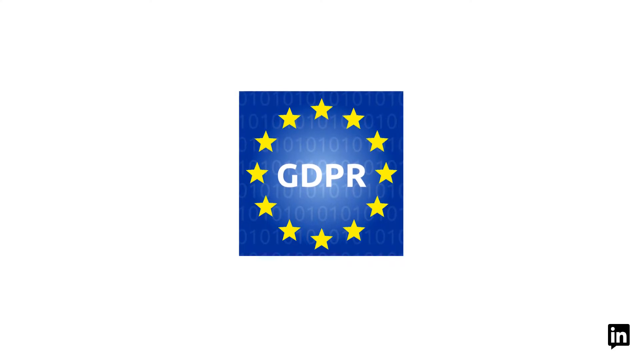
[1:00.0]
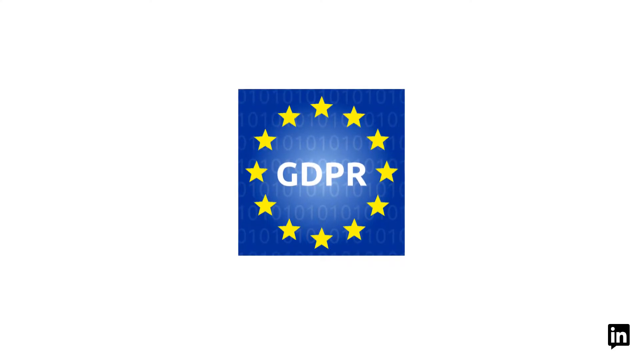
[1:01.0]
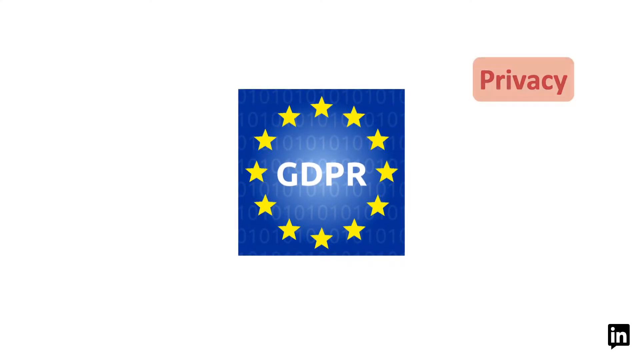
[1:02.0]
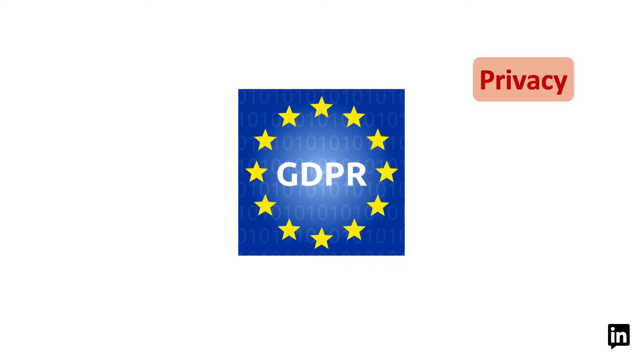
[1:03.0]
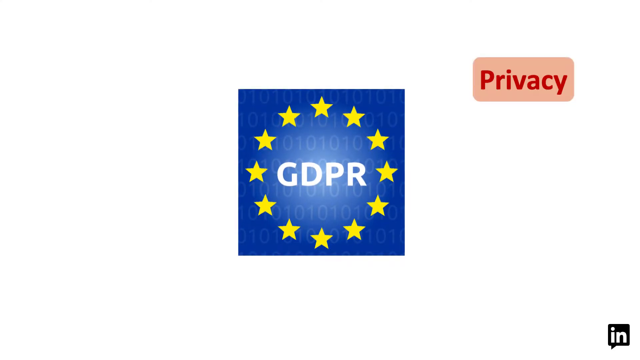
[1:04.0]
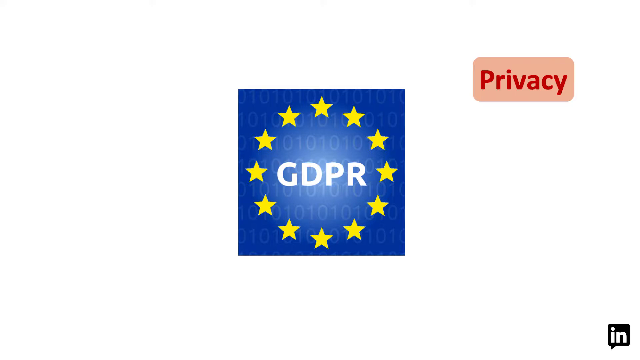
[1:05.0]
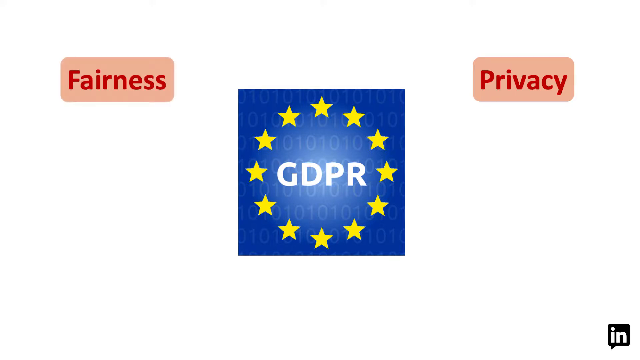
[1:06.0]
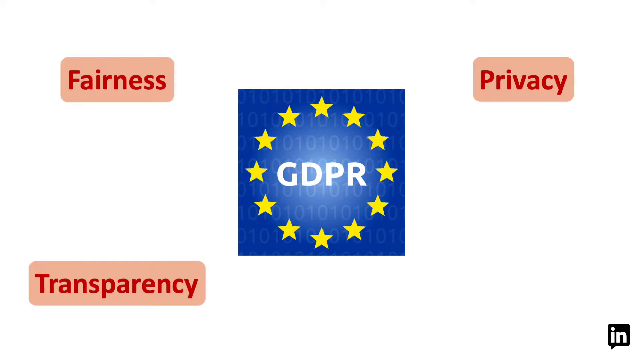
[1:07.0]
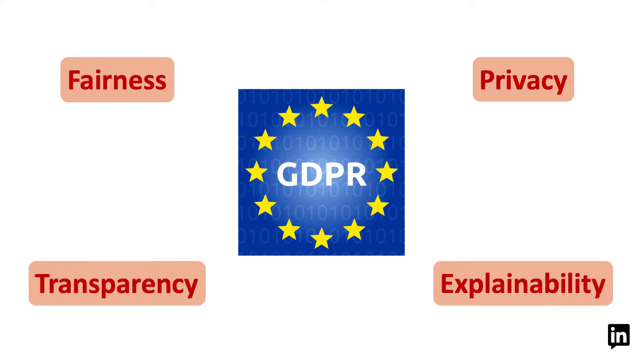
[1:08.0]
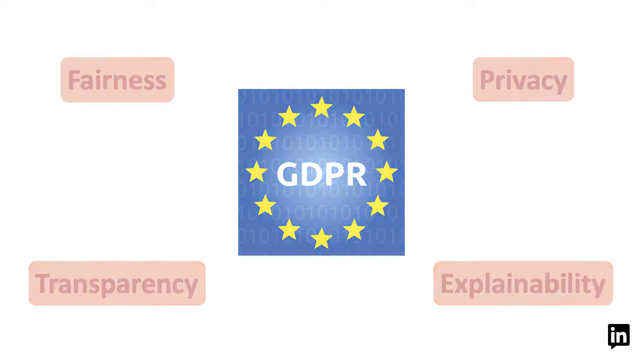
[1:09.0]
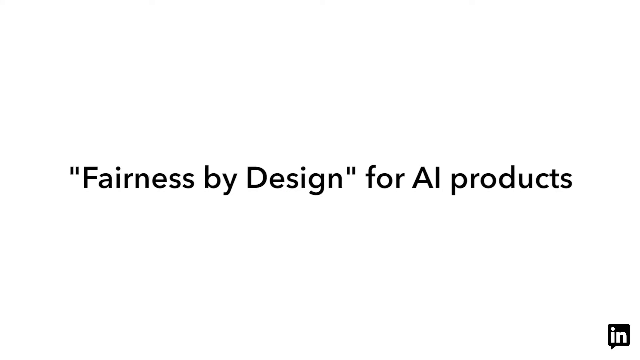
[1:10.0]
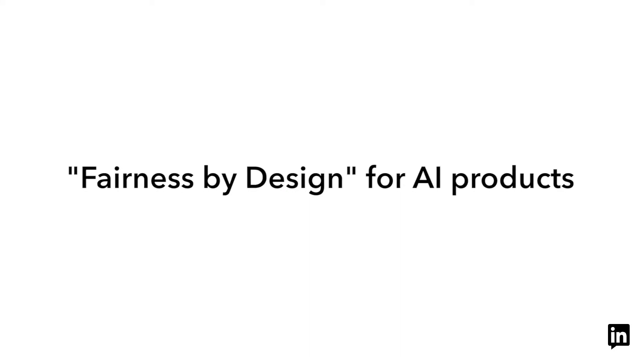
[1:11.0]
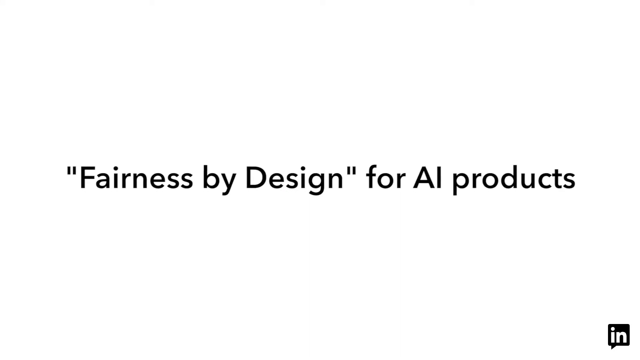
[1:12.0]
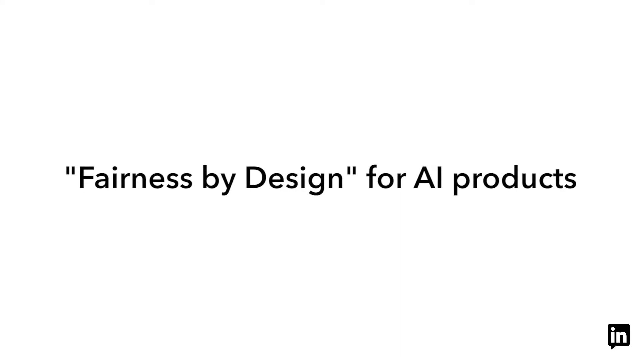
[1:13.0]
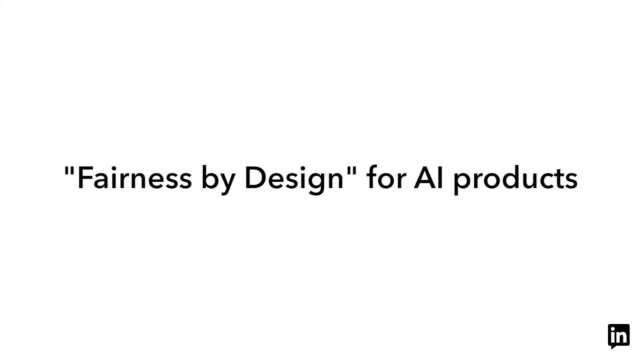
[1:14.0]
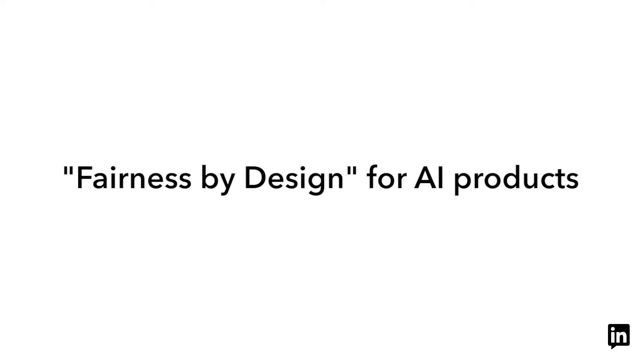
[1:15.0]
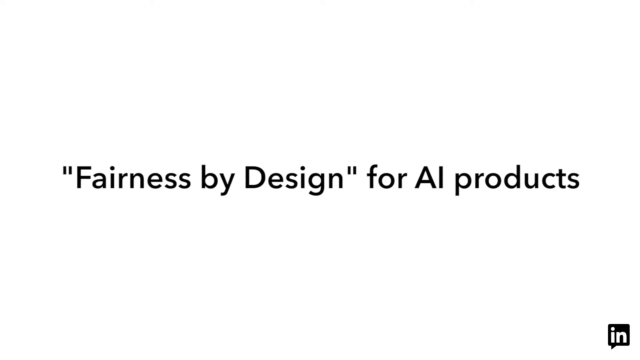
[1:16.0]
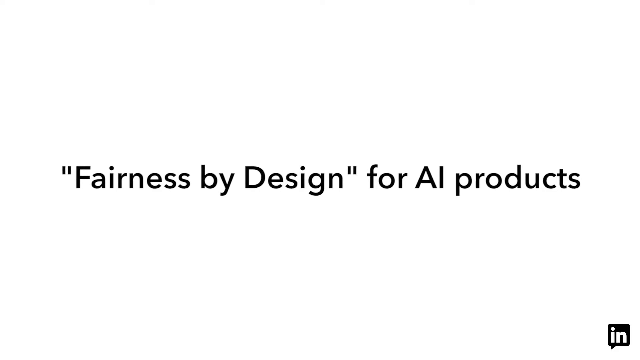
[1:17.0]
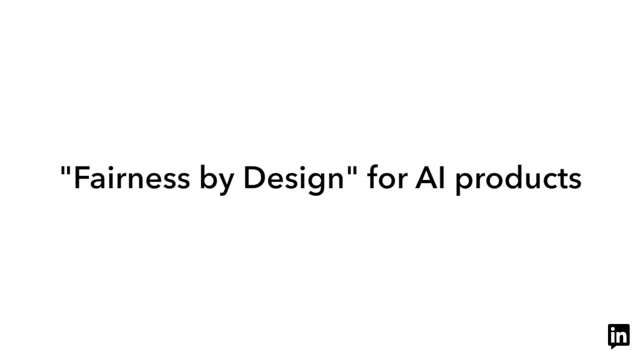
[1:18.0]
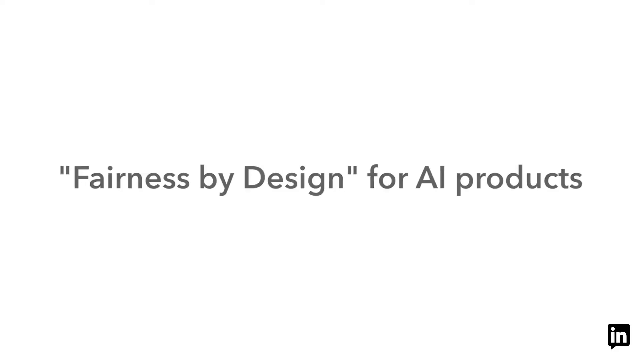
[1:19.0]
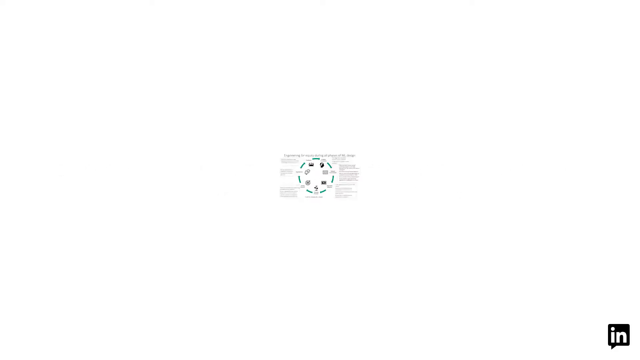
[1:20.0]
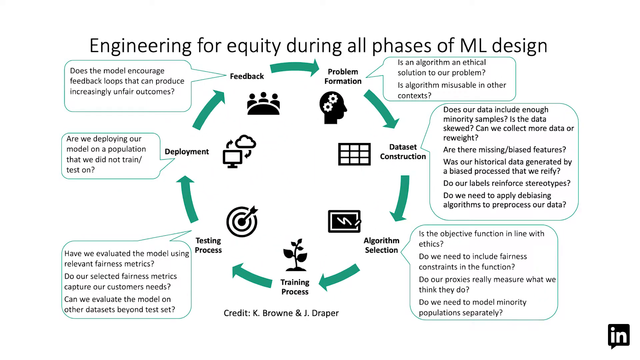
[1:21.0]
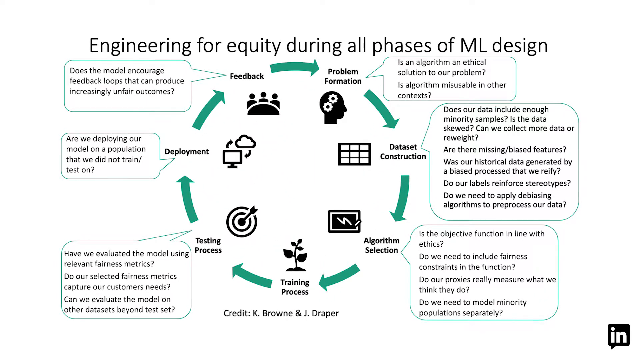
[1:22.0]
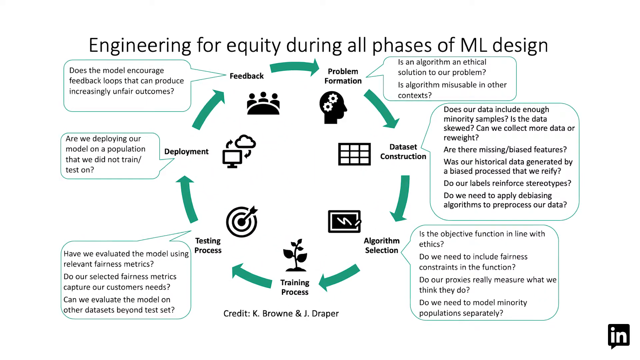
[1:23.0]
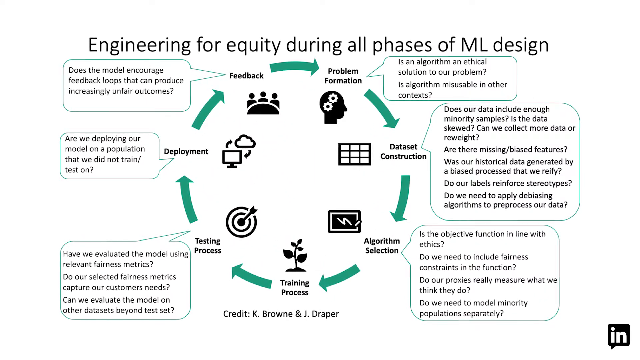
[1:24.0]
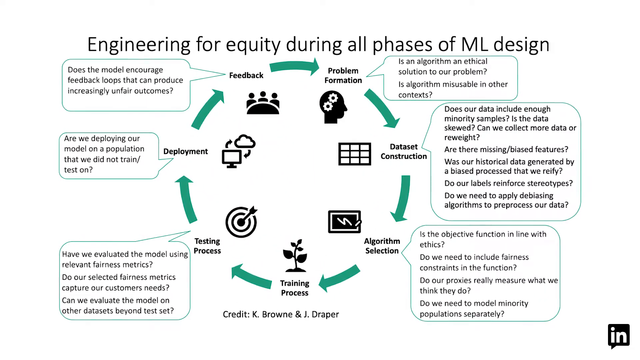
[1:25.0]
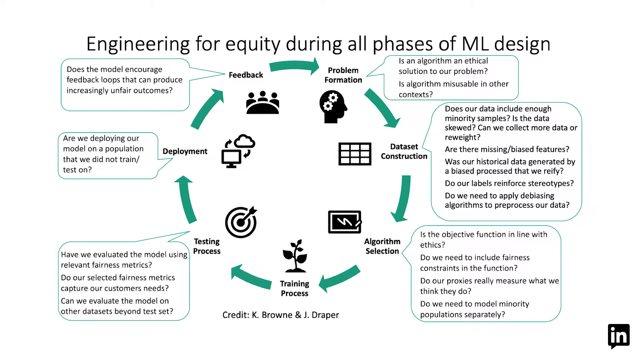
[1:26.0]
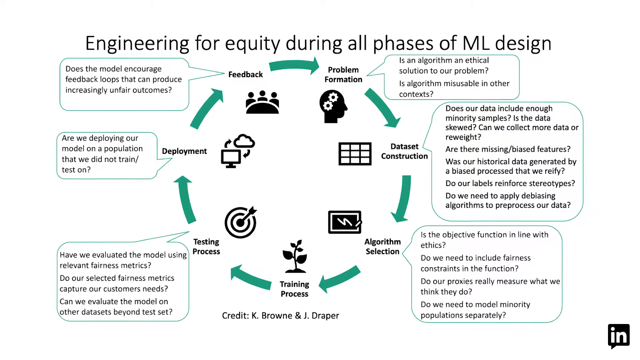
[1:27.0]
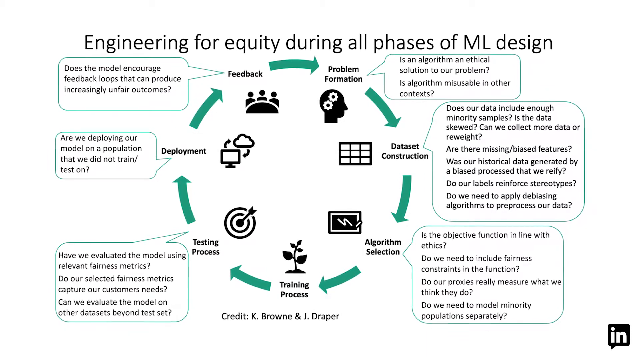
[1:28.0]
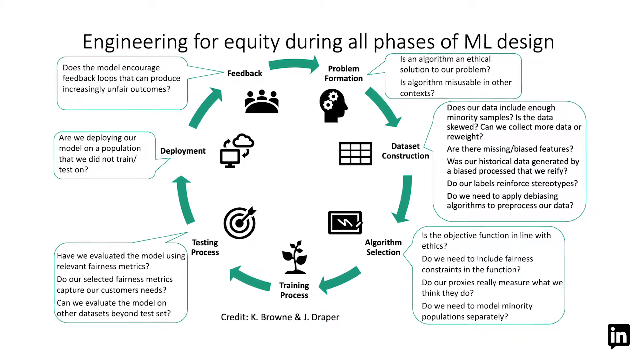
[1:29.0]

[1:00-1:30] The next slide opens with a blue icon of 12 gold stars in a circle surrounding the letters GDPR. An icon in the top right shows the word "privacy" in red letters on an orange background, in a kind of button-like form. Icons in the same format read "fairness" in the top left, "transparency" in the bottom left and "explainability" in the bottom right. The slide fades into a large header in black font on a white background reading "fairness by design", in quotation marks, "for AI products". The presentation stays on this slide for another five or six seconds, then moves to a slide titled "engineering for equity during all phases of ML design" with a circular graph of the phases: feedback, then problem formation, data set construction, algorithm selection, training process, testing process, deployment, and back to feedback.